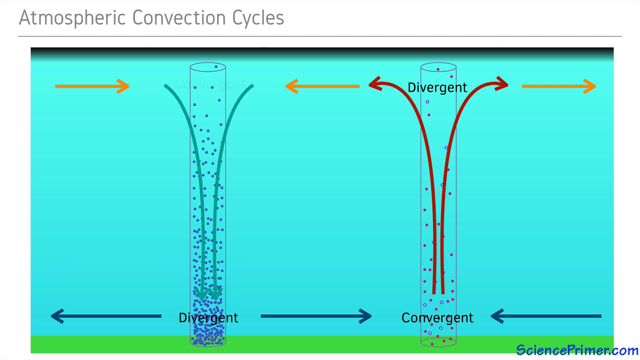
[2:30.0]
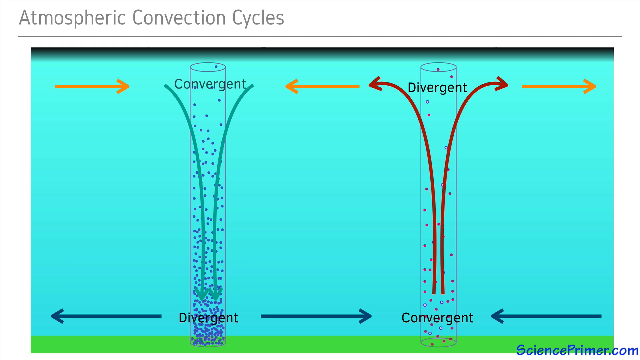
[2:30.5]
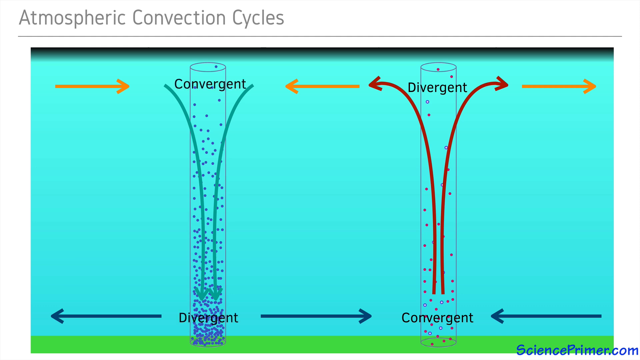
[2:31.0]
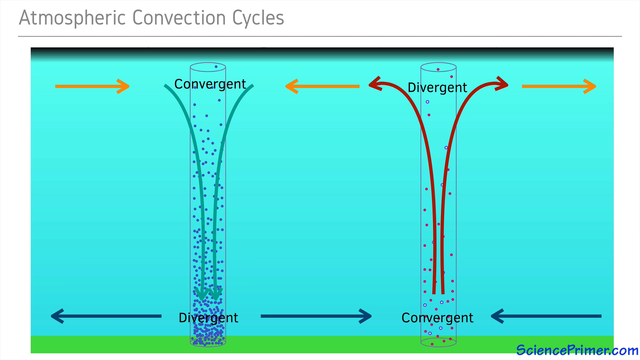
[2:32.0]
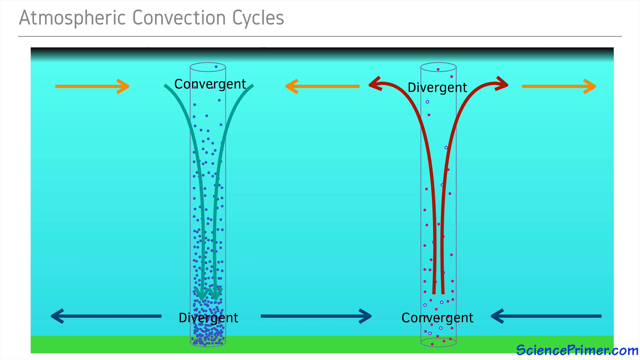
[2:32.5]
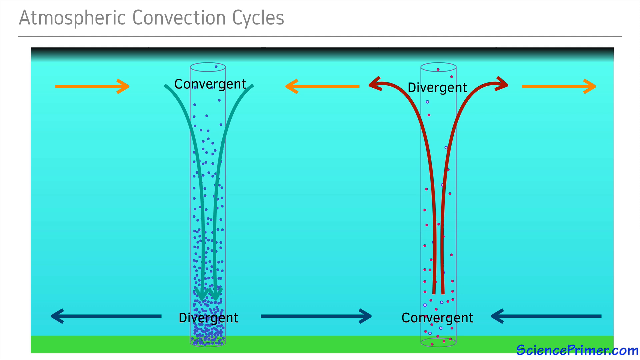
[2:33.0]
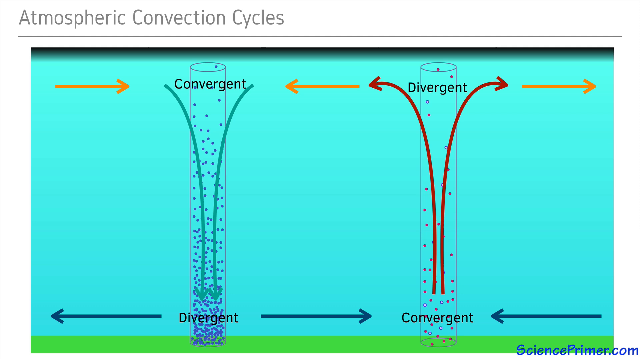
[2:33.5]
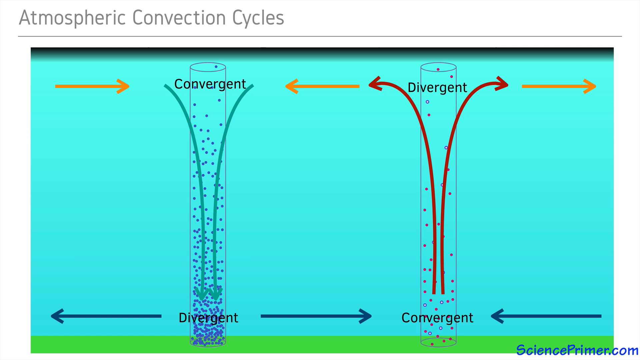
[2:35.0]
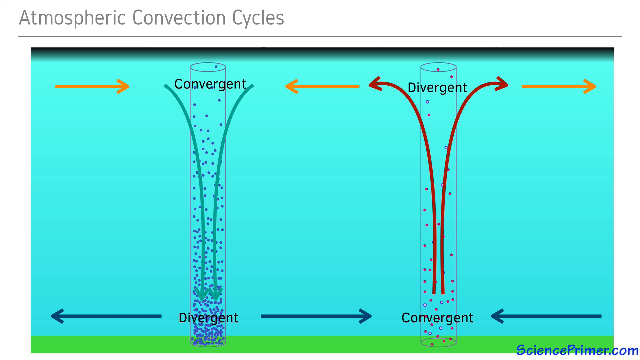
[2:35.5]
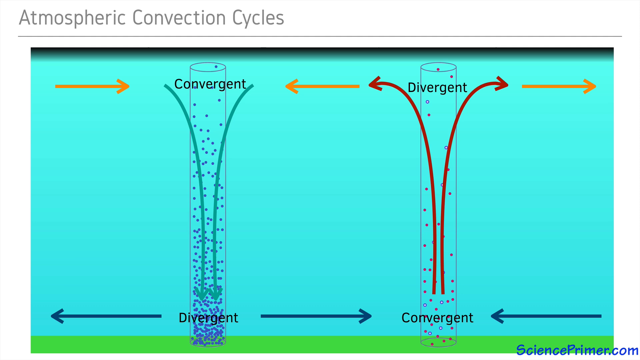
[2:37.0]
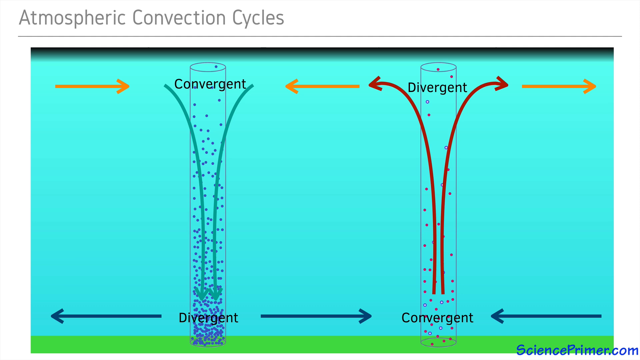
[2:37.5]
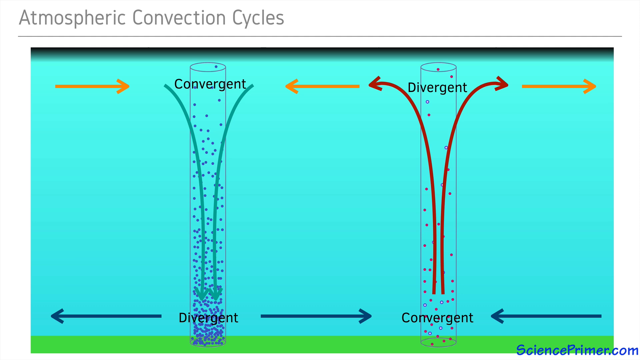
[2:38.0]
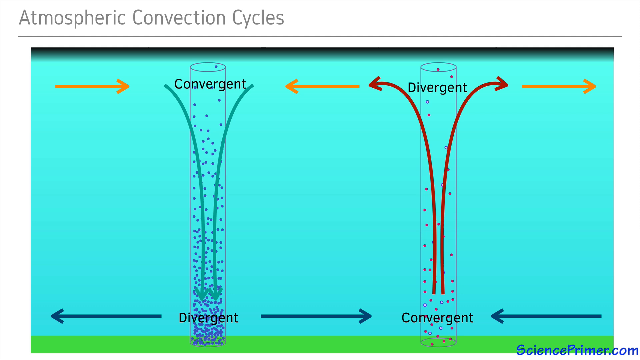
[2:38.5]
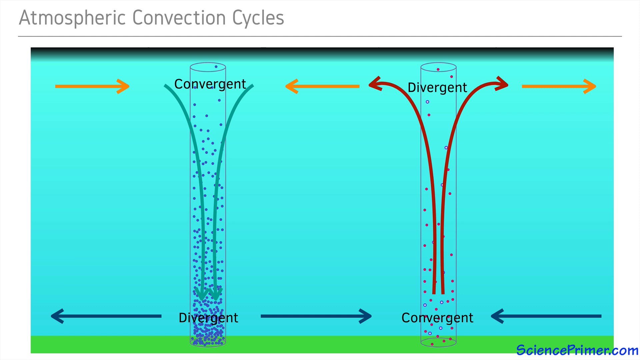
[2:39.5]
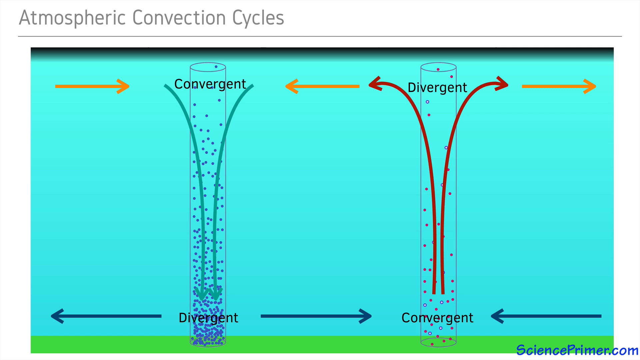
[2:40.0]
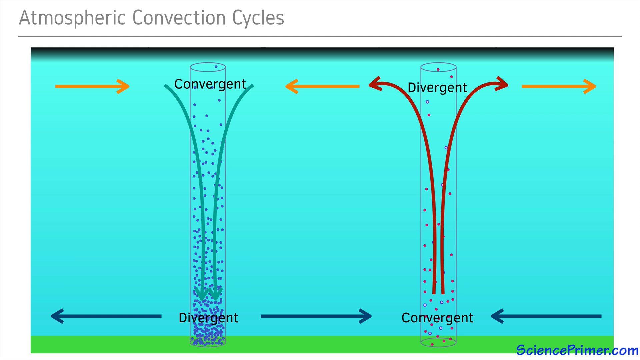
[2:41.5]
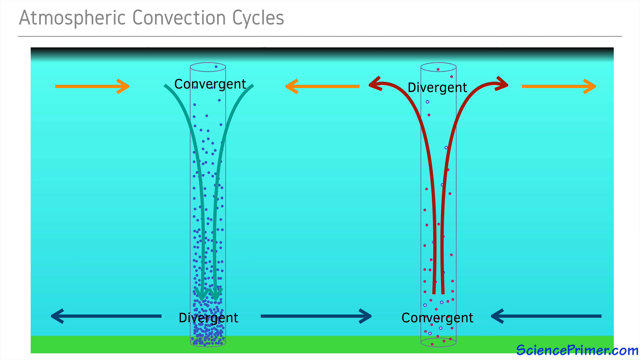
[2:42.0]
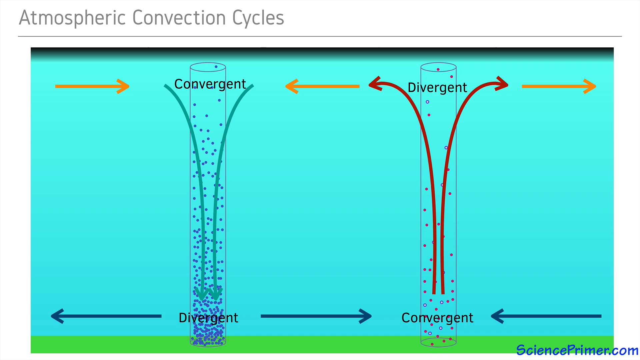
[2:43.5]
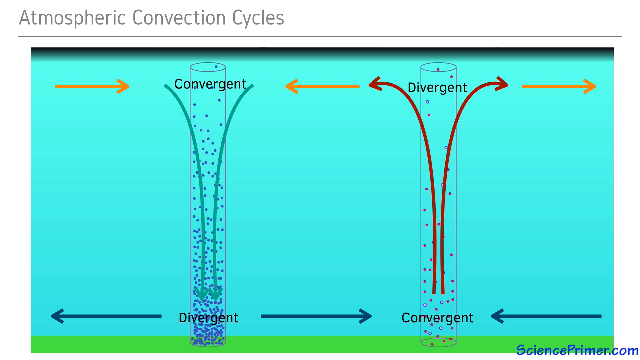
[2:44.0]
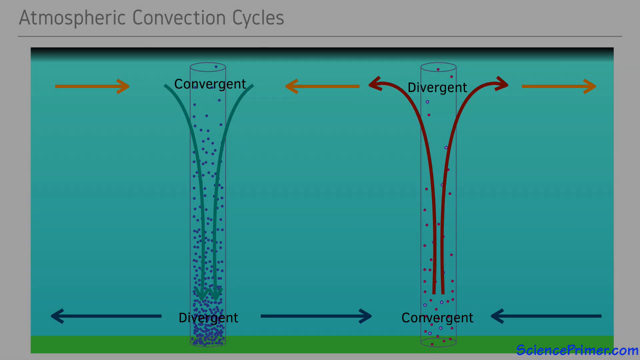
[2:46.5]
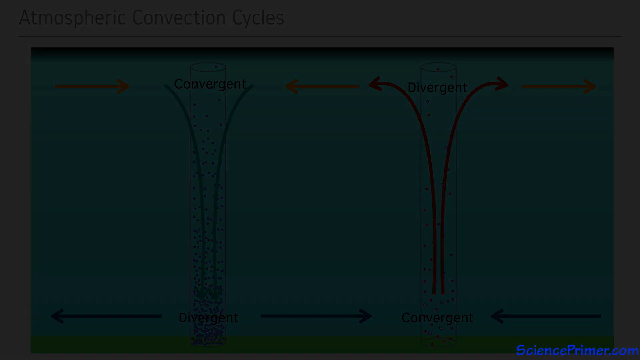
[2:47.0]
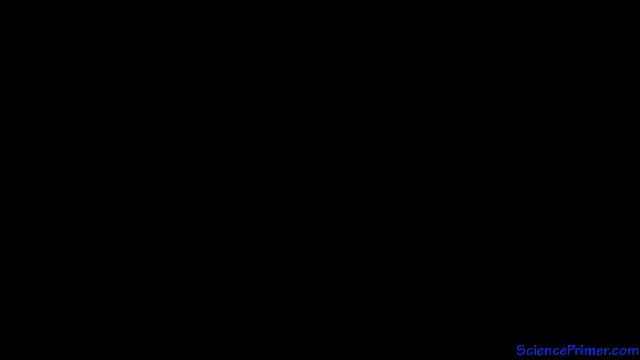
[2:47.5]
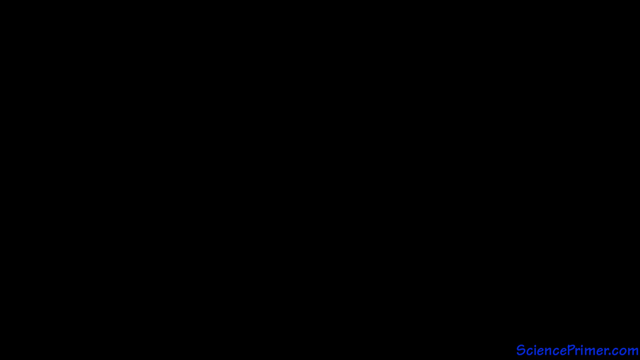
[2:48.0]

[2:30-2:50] Words appear on the left upright outlined cylinder: "convergent" on top and "divergent" on the bottom. On the left cylinder, arrows point away from the bottom, going to the left and right sides, and arrows on top point inward. On the right side there are two arrows: one in the top right corner pointing away from the top area of the right cylinder, and one in the bottom right corner pointing toward the base of the right cylinder. The arrows on the bottom pointing to the sides are blue, and the arrows on top are yellow.